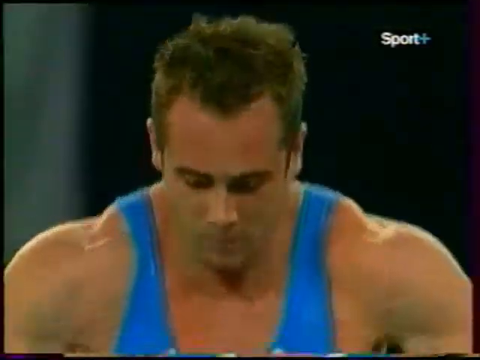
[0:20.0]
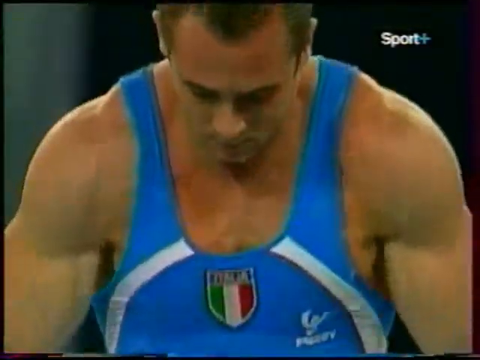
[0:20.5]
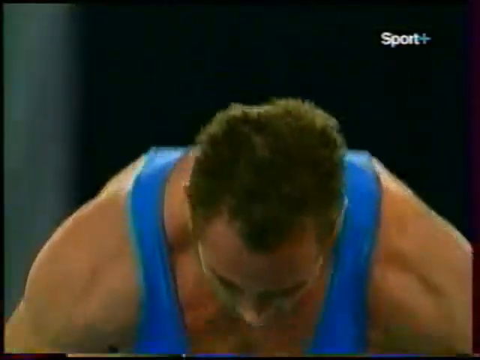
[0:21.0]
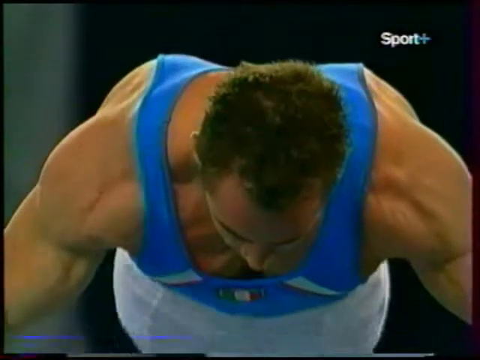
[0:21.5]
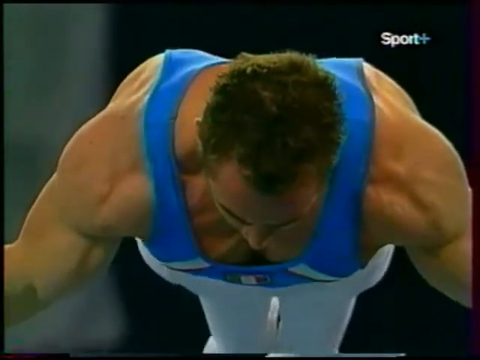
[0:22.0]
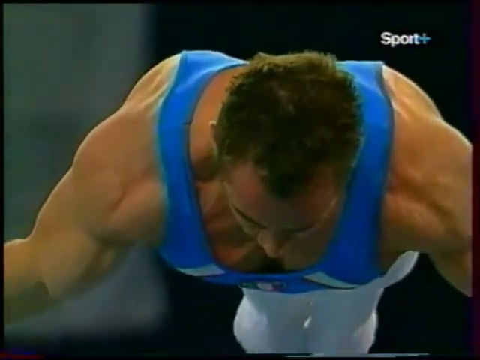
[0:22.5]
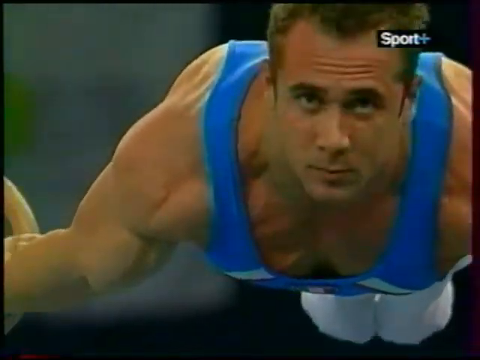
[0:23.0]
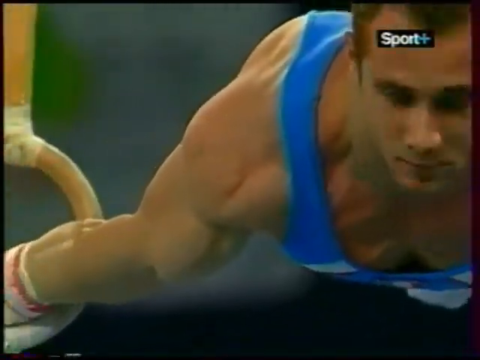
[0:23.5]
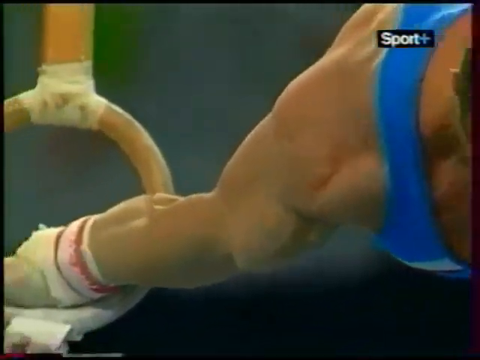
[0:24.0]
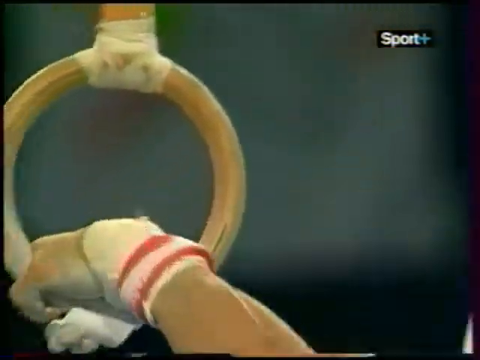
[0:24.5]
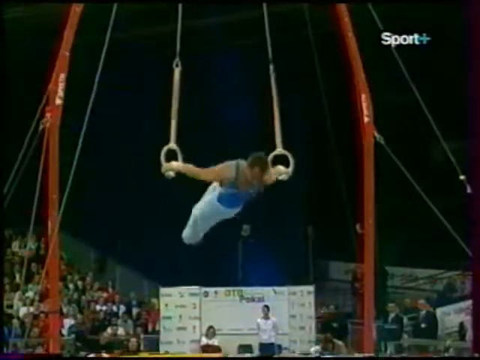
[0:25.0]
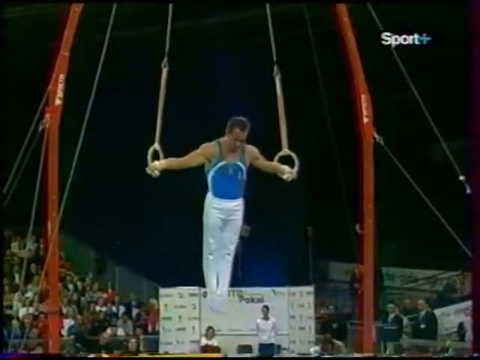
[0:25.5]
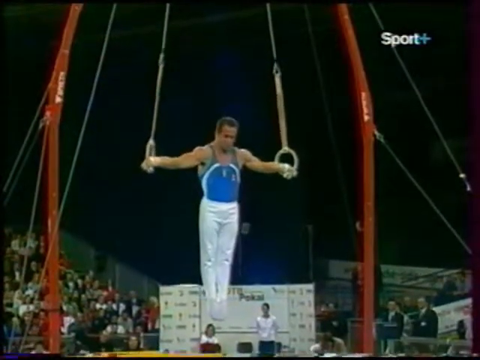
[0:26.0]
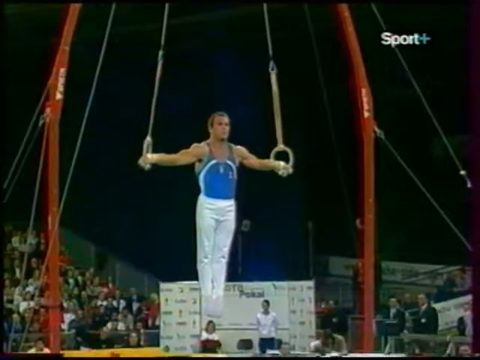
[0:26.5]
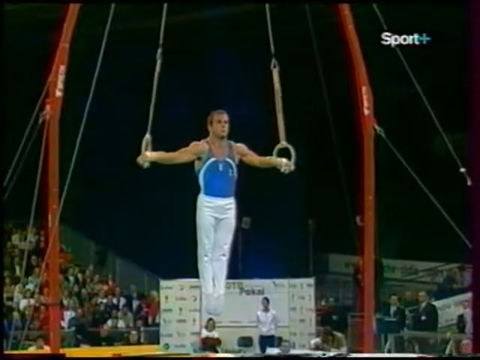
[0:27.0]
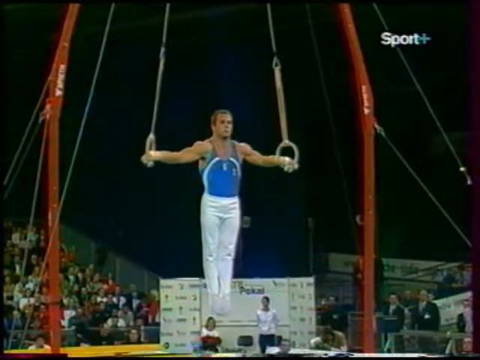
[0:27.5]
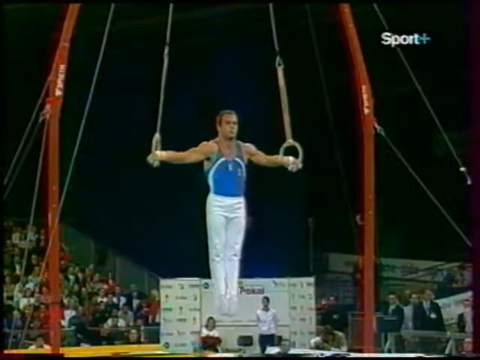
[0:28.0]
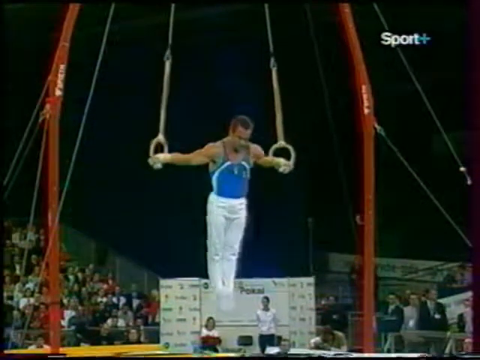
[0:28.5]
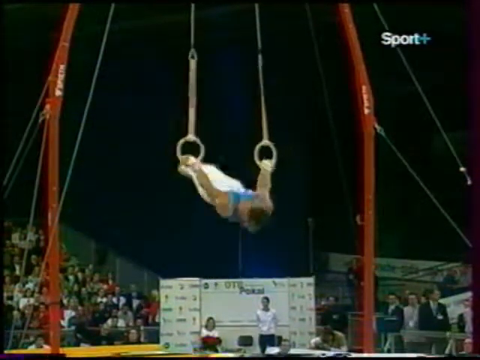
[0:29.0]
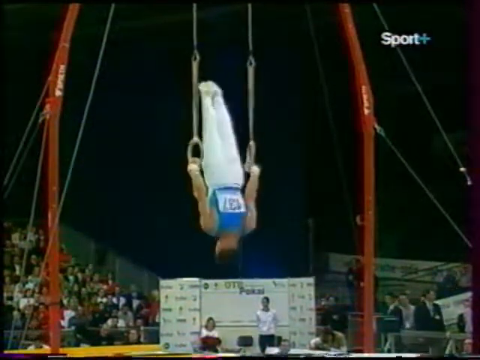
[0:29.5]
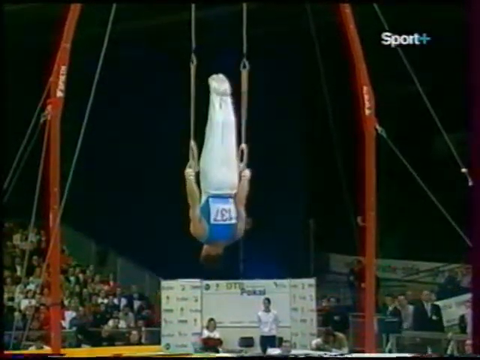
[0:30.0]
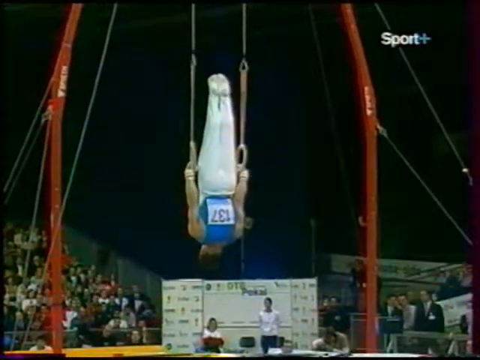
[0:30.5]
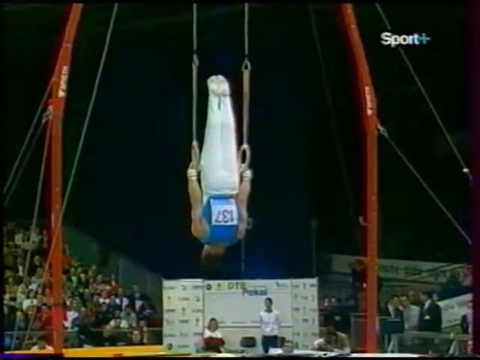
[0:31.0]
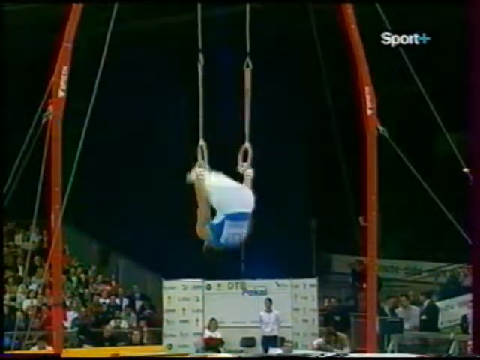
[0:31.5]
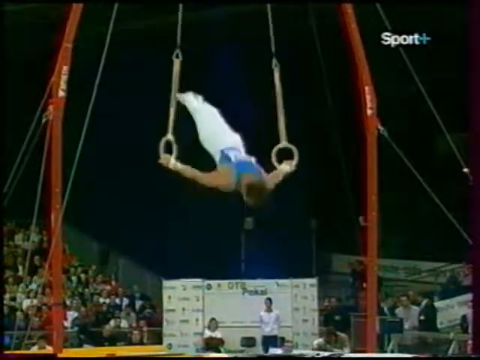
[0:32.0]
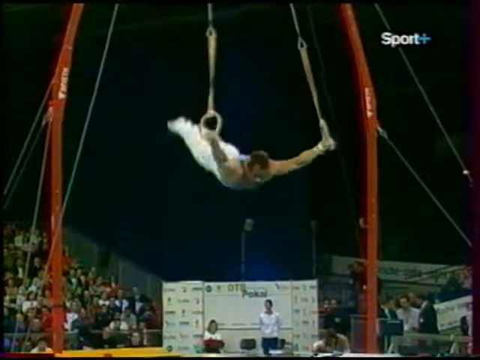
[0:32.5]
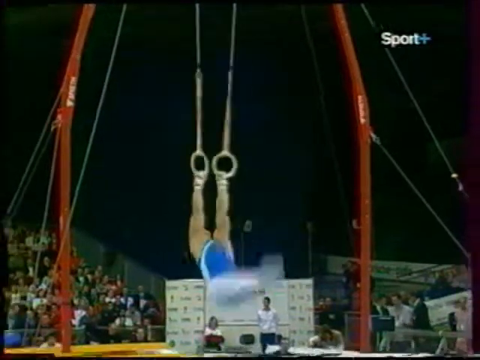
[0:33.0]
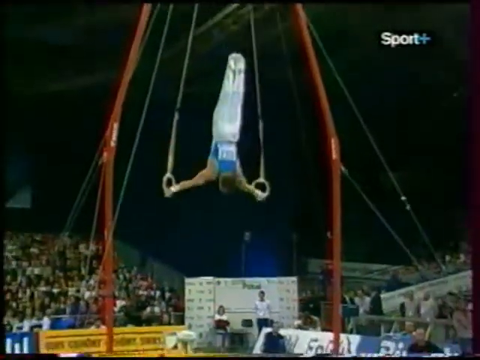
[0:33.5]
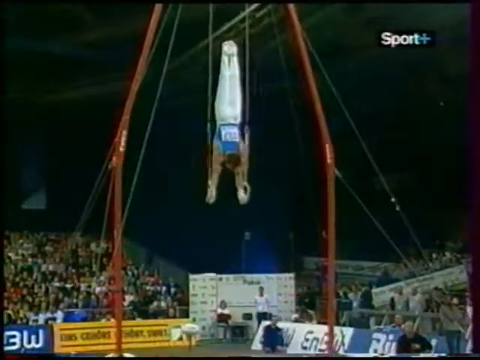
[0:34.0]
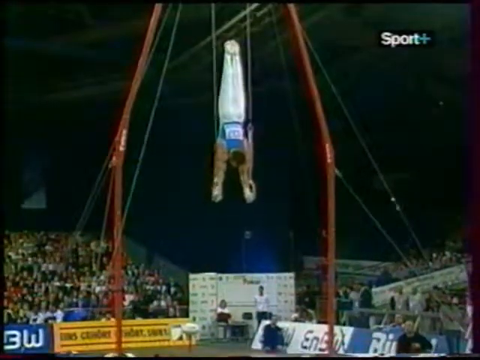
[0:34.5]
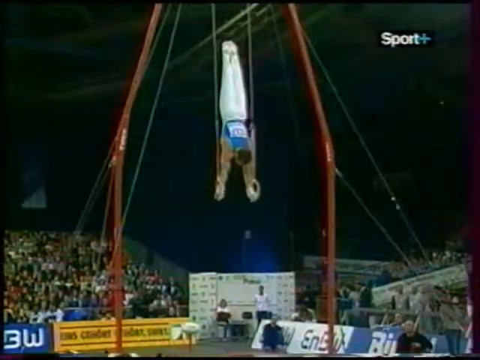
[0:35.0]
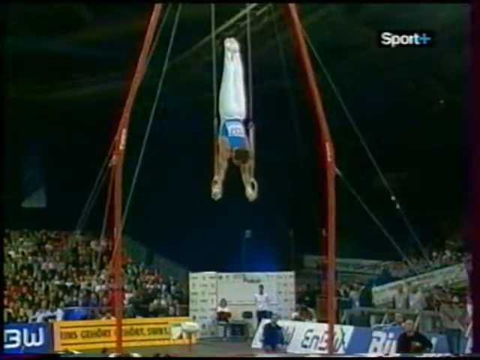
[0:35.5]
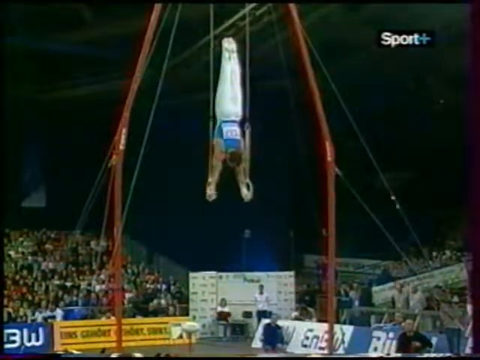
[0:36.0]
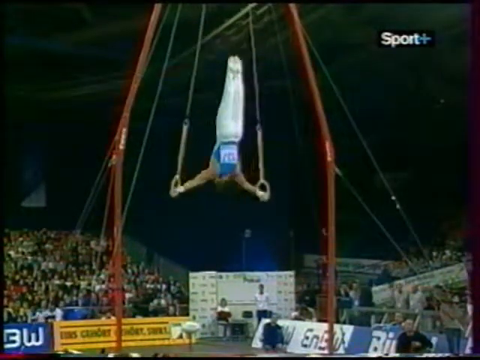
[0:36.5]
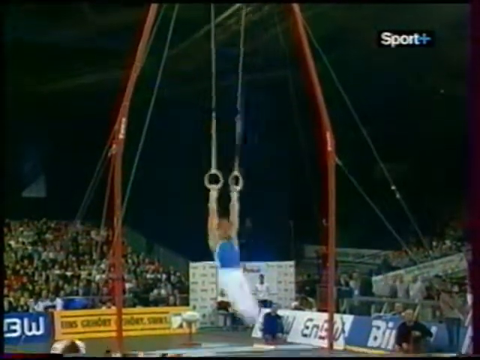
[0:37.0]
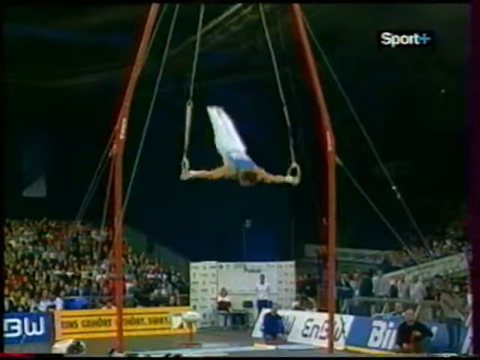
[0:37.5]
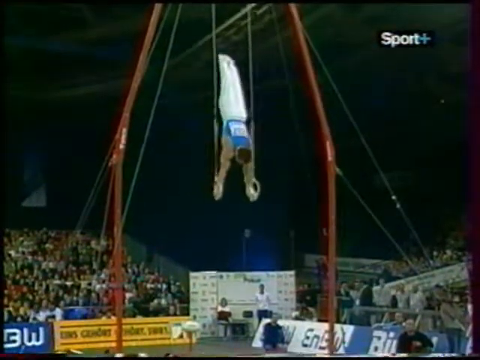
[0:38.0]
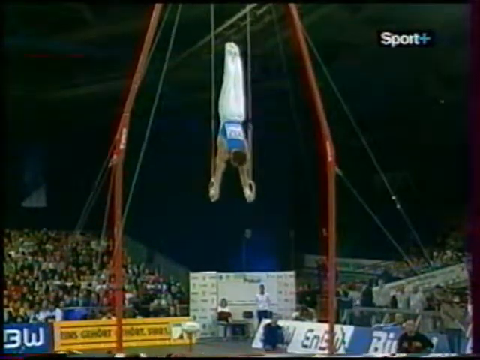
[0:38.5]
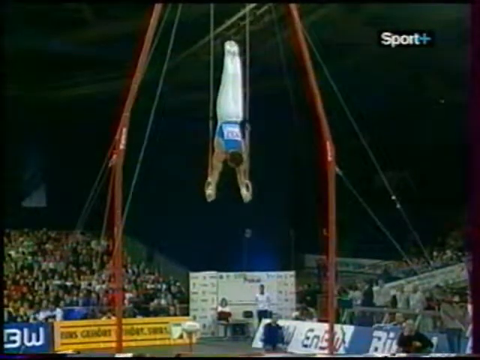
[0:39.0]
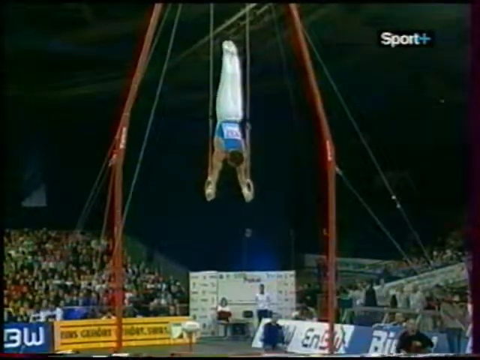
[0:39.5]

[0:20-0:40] A male gymnast works on the rings. He has his arms stretched outward, then flips his body so his feet are in the air. He bends his body and goes backwards, and then his arms are straight up and his body is up. The straps shake just slightly as he holds himself, strong and poised, with his whole body upside down. He wears white pants, what look almost like white socks, and a very tight blue tank top. He has a number on his back, probably his participation number, which reads 137. He holds his body parallel with the rings stretched outward, and then holds his body upwards. The bars holding up the straps are red. An audience spectates in the background, and what looks like a coach is further down. There is kind of a white rectangle in the lower section, and other straps hold the whole system together besides the straps holding the rings.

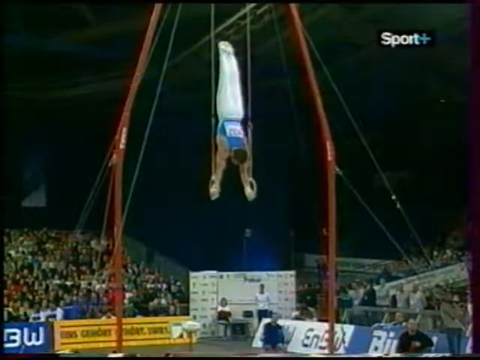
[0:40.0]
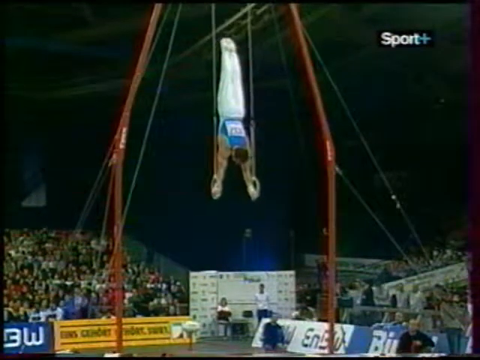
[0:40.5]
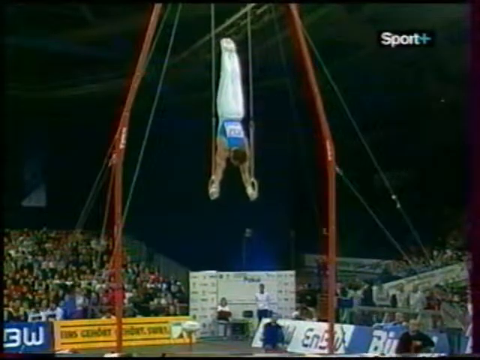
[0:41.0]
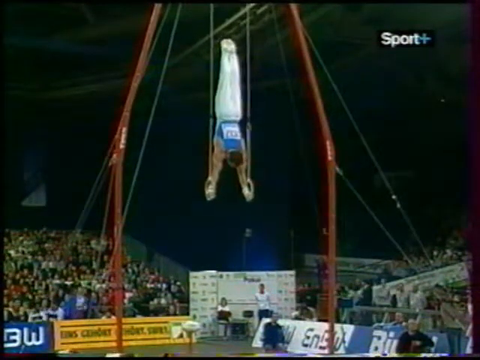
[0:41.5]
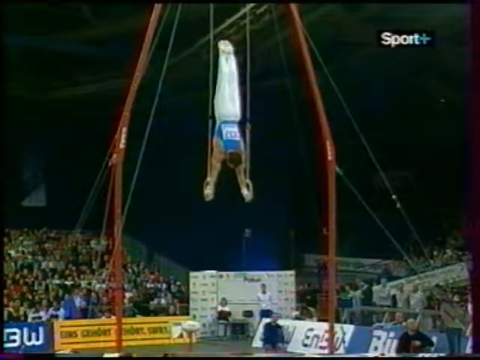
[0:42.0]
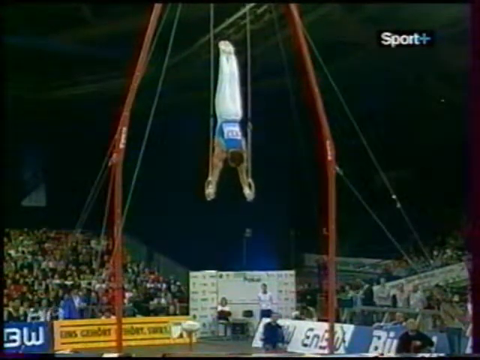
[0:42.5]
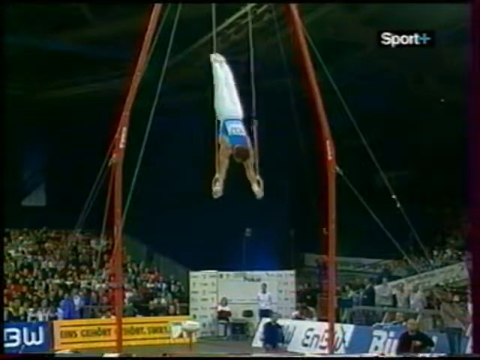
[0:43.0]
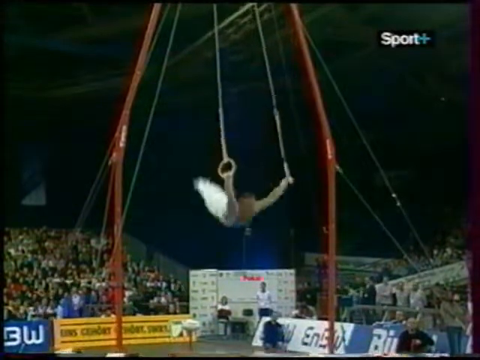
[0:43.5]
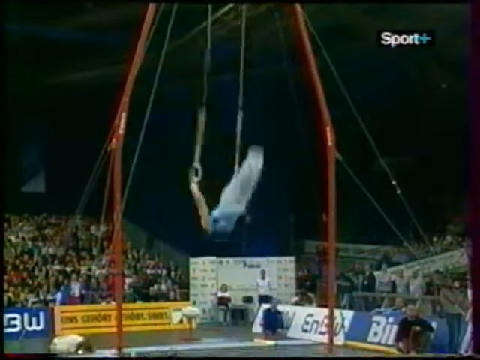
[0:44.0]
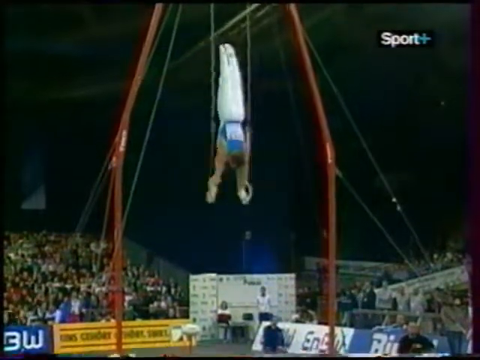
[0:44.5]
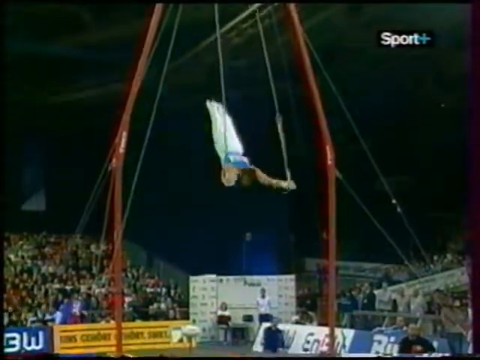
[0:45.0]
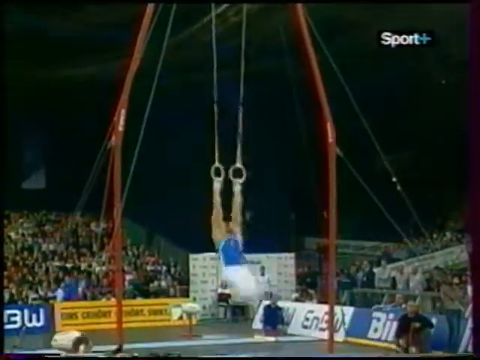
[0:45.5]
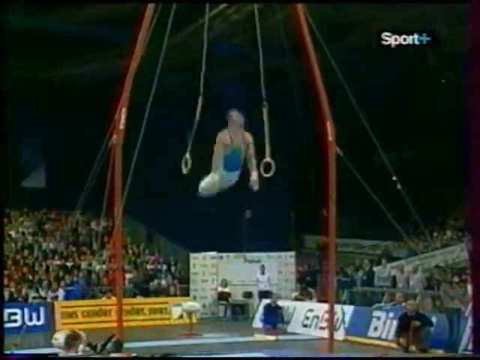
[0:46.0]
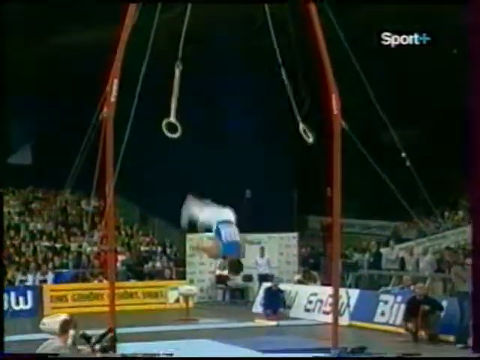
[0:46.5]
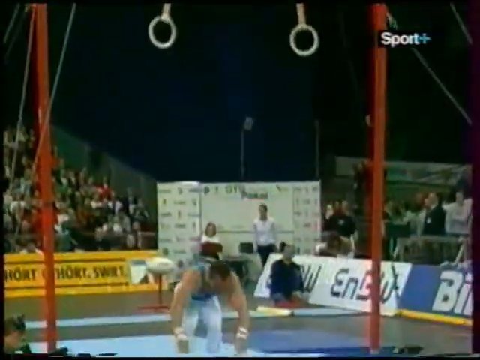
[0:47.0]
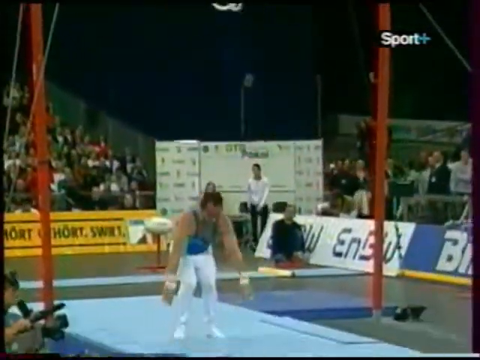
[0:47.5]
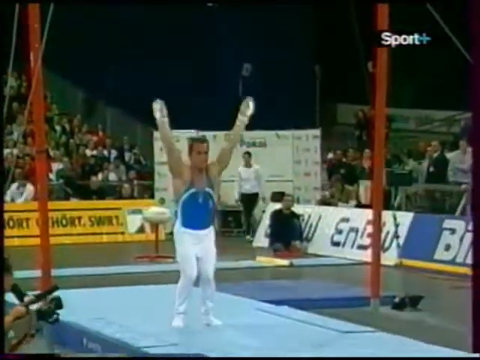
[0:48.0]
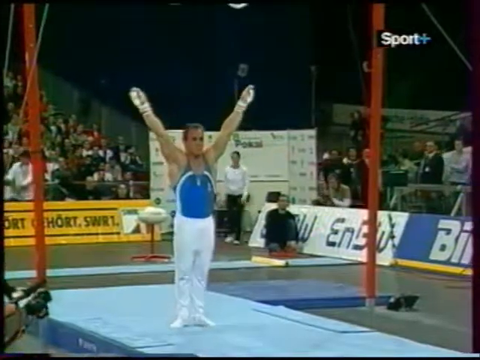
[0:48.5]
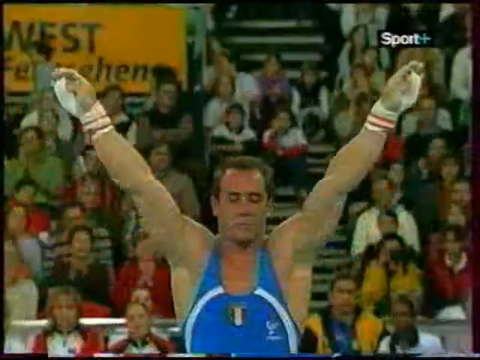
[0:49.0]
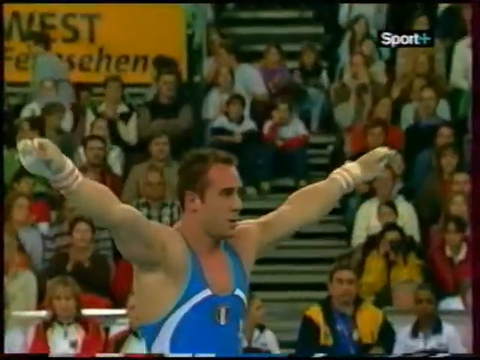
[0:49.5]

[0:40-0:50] The male gymnast on the rings has his whole body supported, the rings held tightly together, and his body inverted. He stays in that position for a moment, then swings down and up and dismounts, his feet landing properly on the lower mat. As he stands up, he extends his arms upwards and outwards, and he kind of smiles. Cameras flash in the background, and people in the audience clap right behind him and beside him.